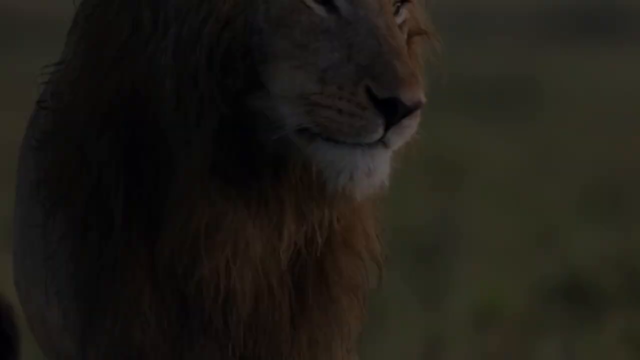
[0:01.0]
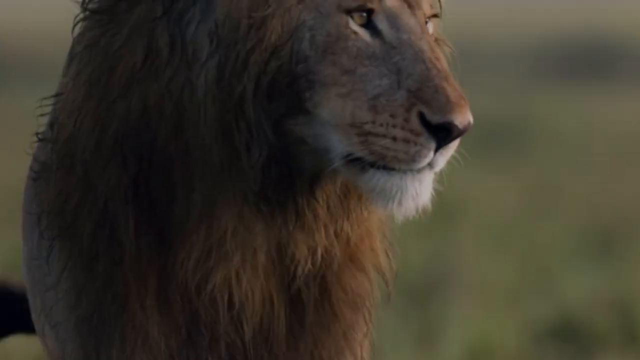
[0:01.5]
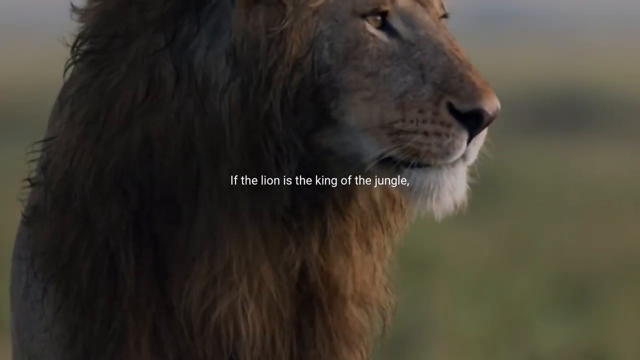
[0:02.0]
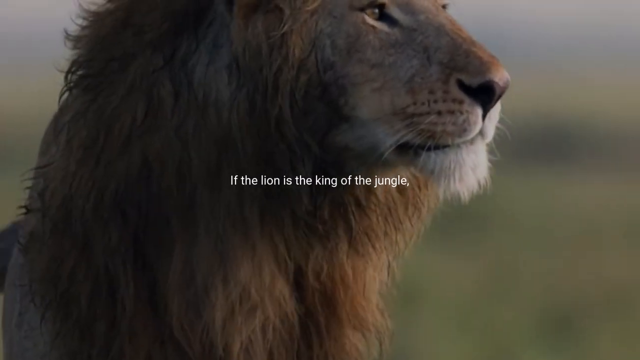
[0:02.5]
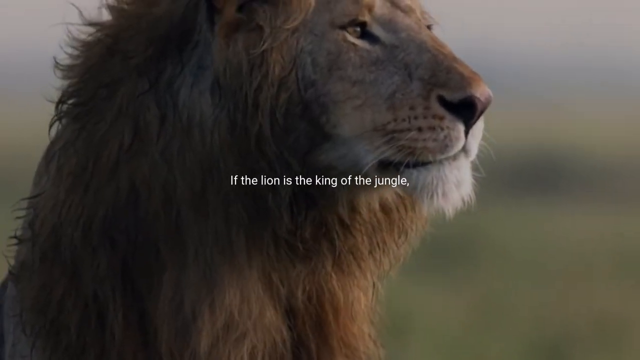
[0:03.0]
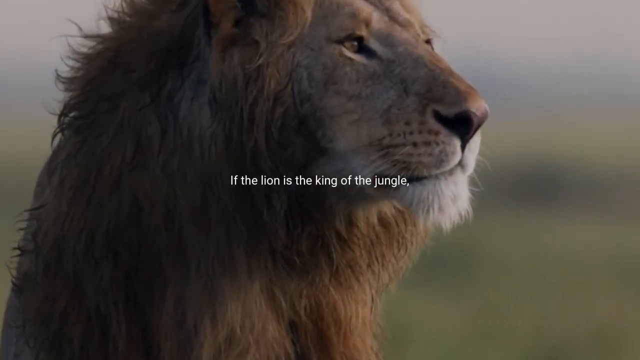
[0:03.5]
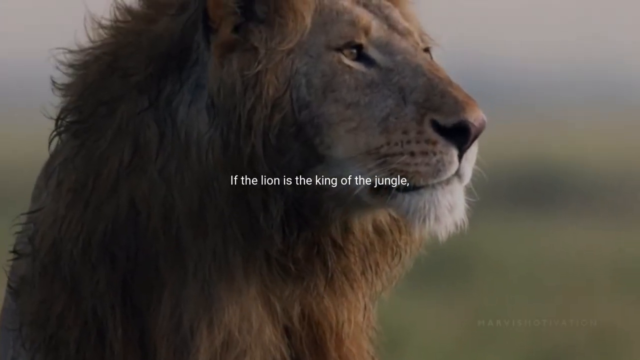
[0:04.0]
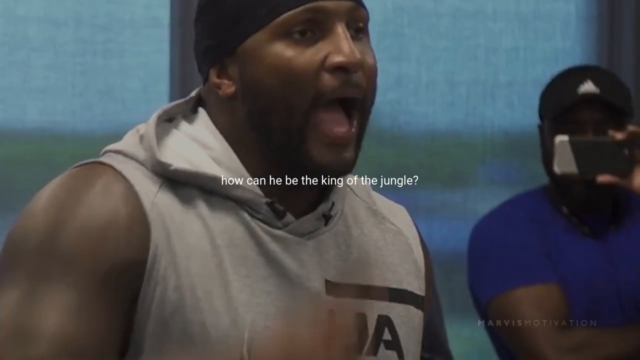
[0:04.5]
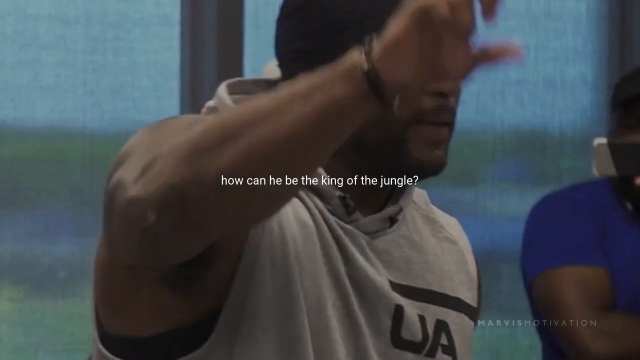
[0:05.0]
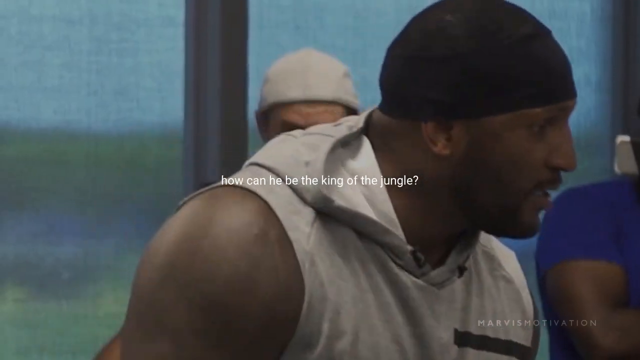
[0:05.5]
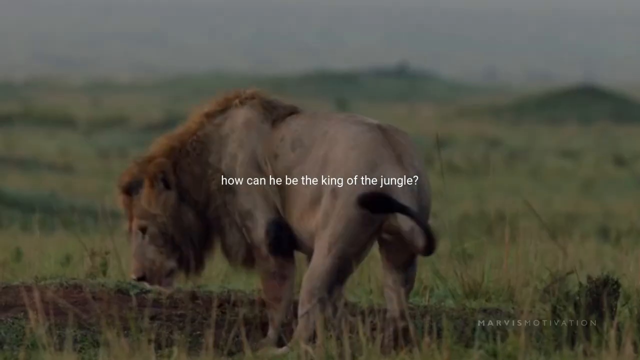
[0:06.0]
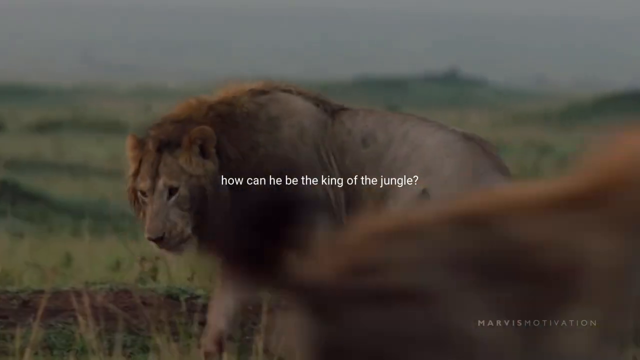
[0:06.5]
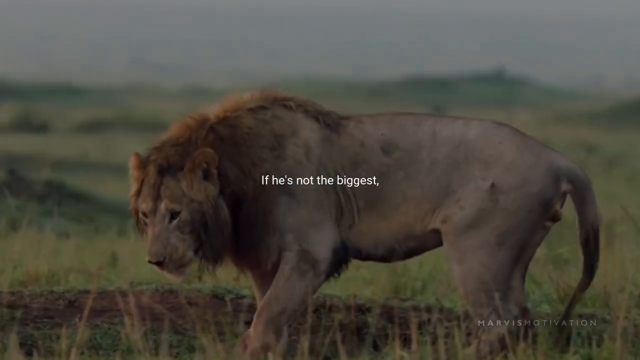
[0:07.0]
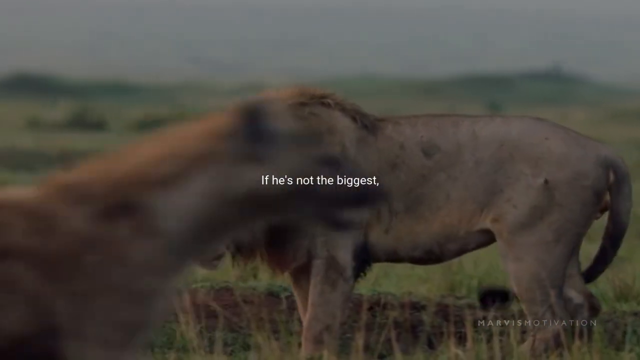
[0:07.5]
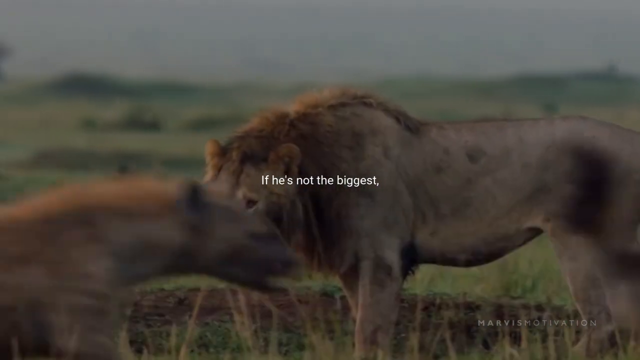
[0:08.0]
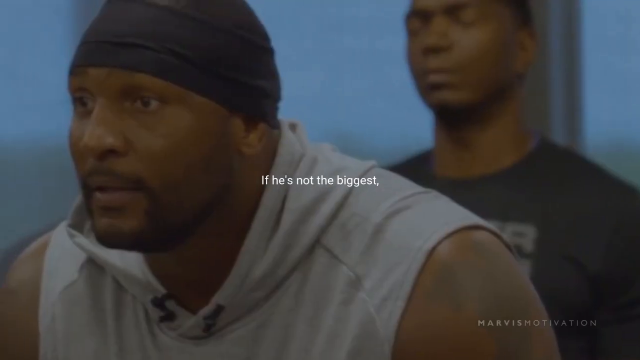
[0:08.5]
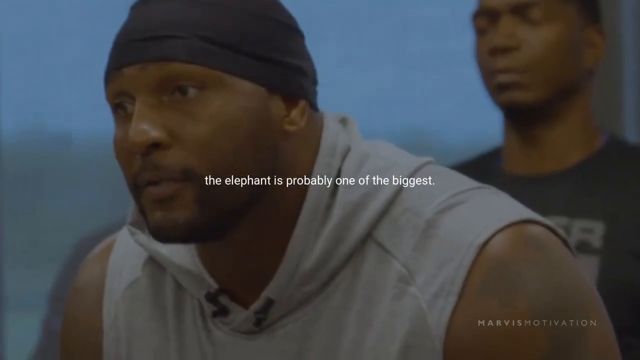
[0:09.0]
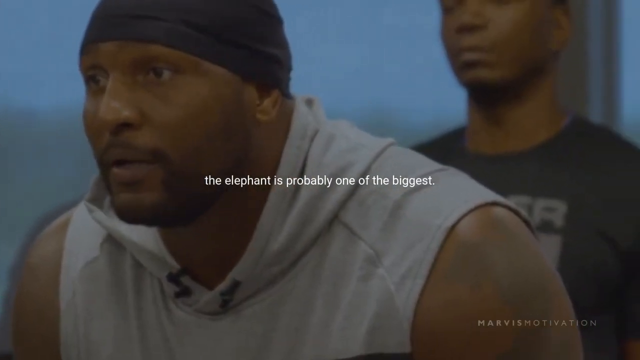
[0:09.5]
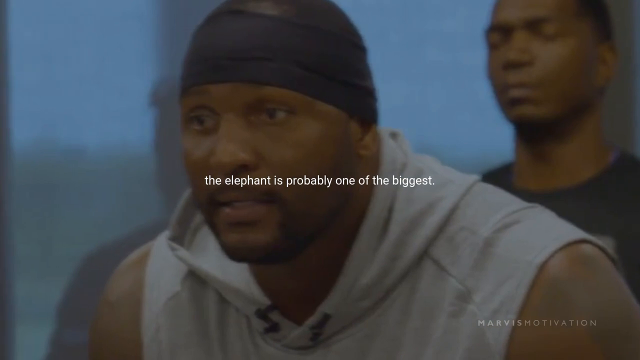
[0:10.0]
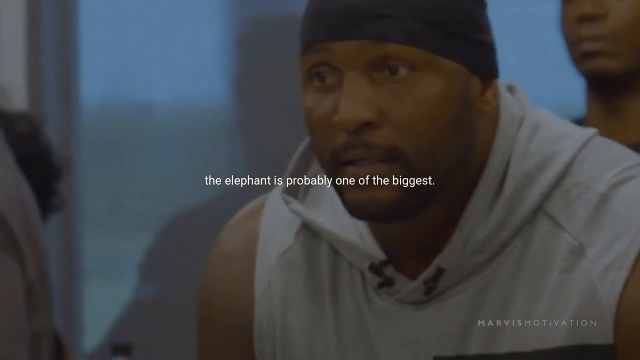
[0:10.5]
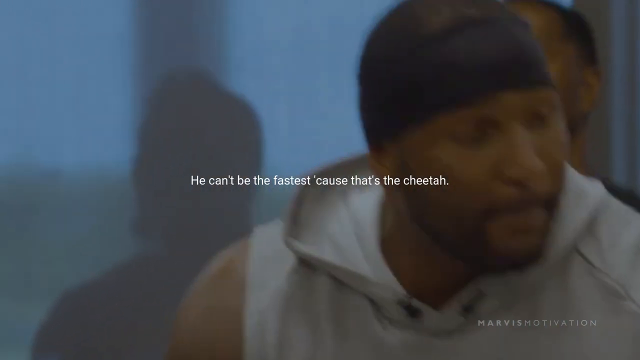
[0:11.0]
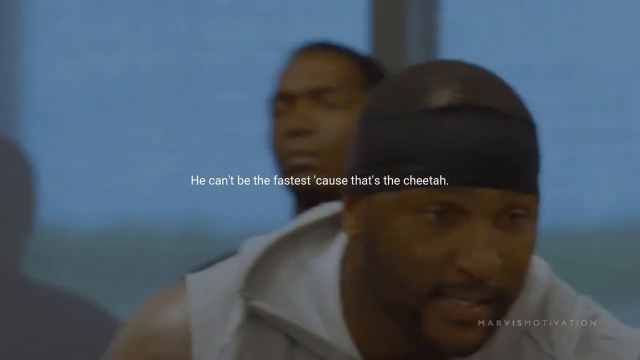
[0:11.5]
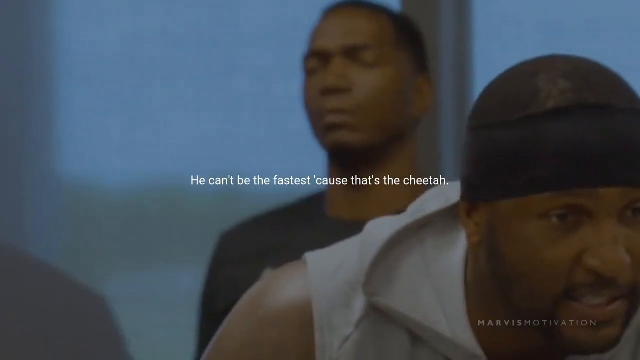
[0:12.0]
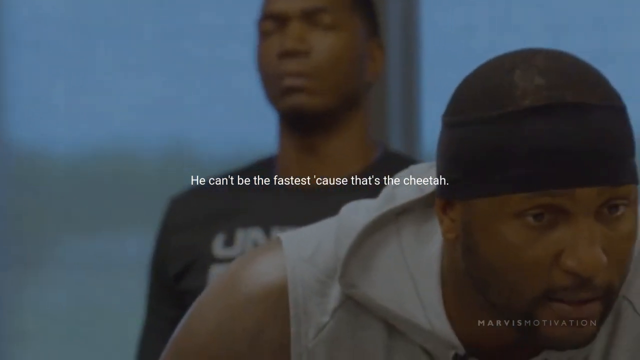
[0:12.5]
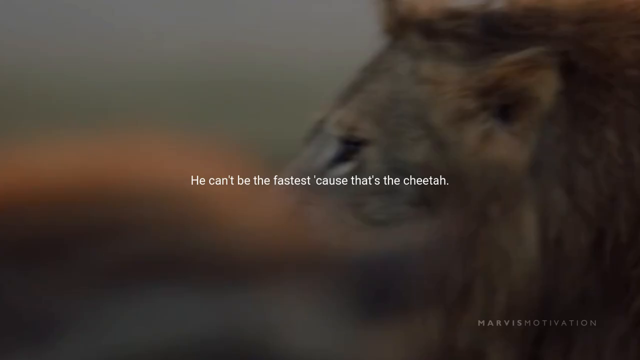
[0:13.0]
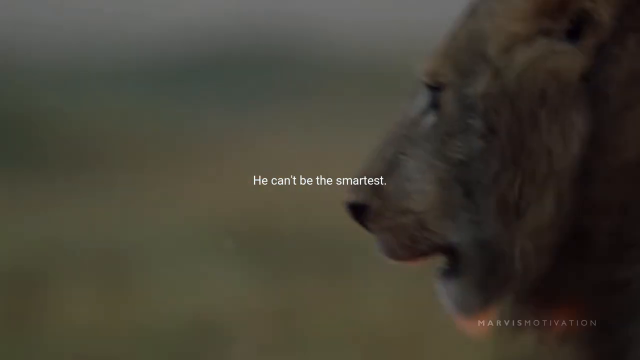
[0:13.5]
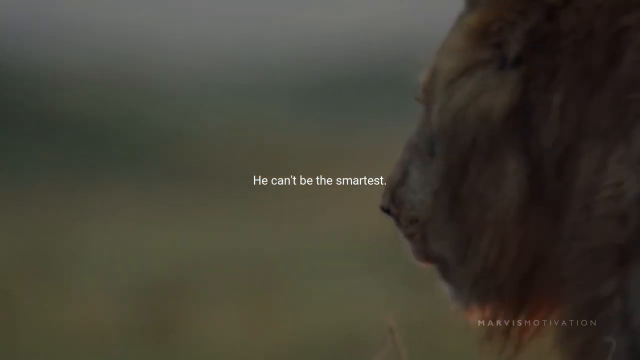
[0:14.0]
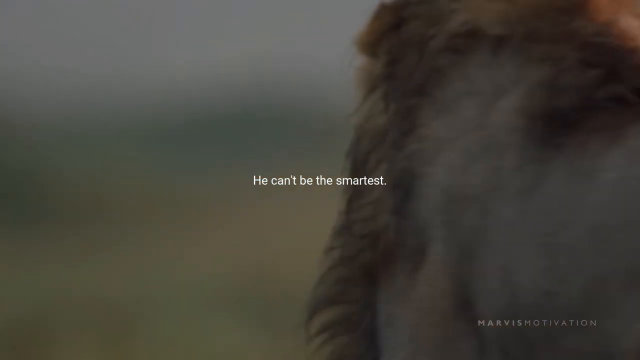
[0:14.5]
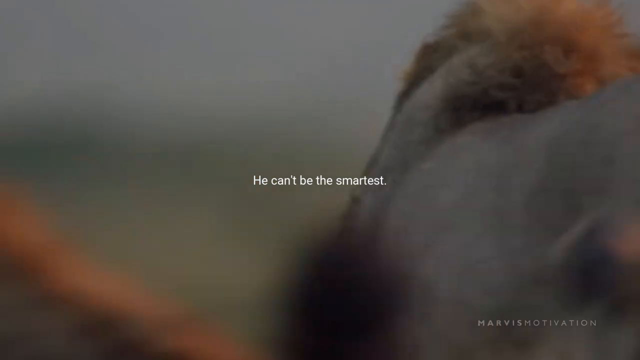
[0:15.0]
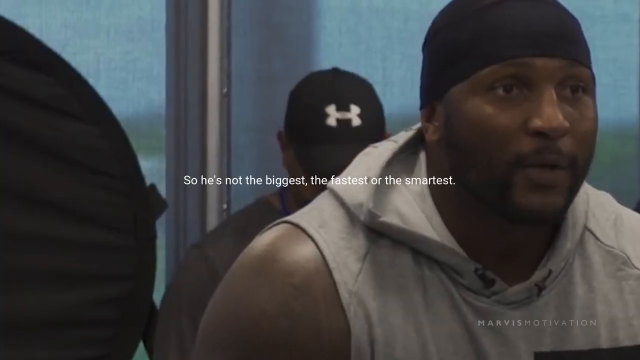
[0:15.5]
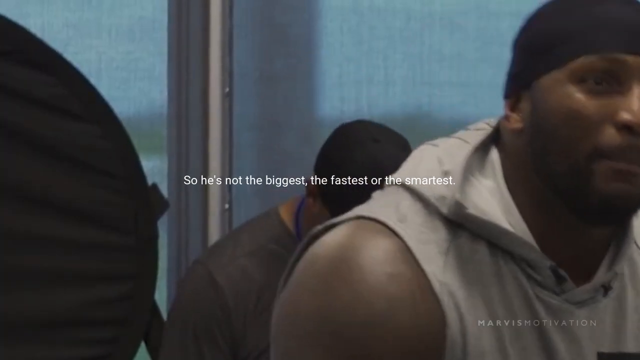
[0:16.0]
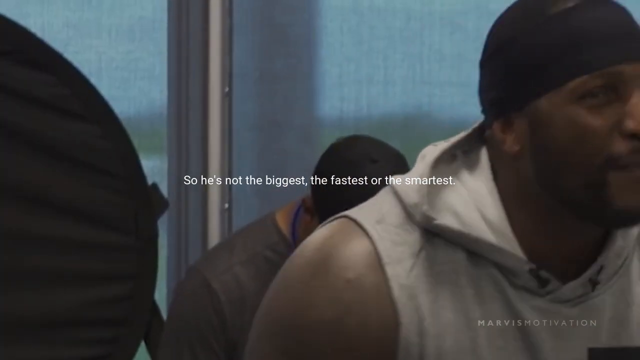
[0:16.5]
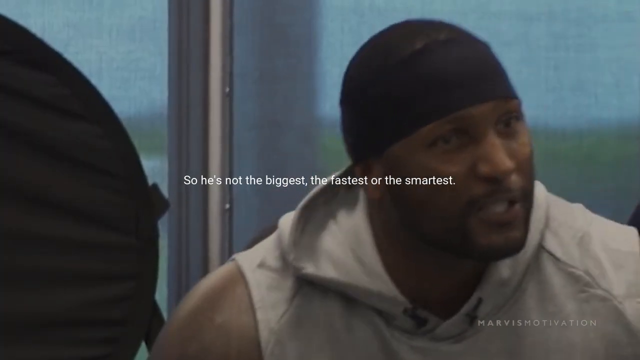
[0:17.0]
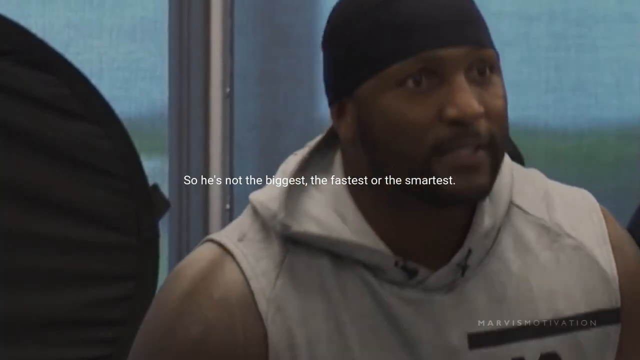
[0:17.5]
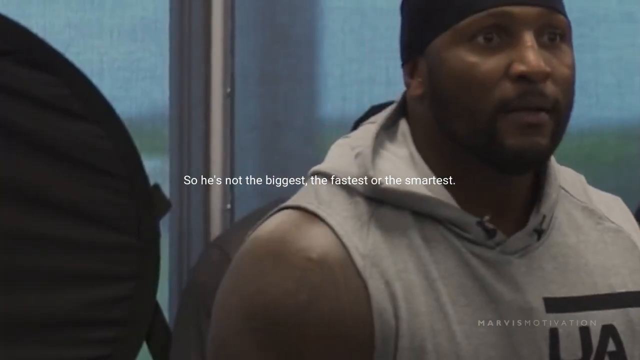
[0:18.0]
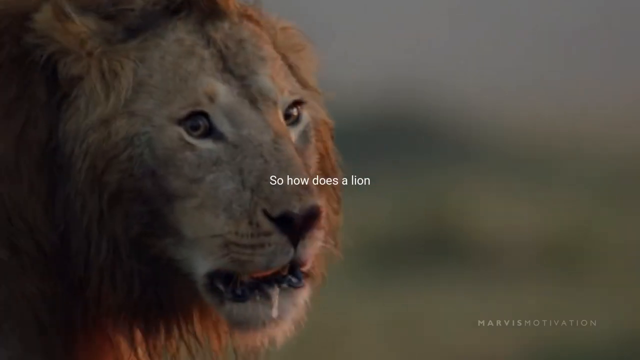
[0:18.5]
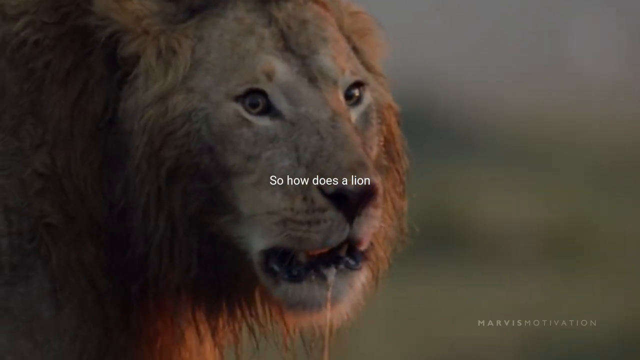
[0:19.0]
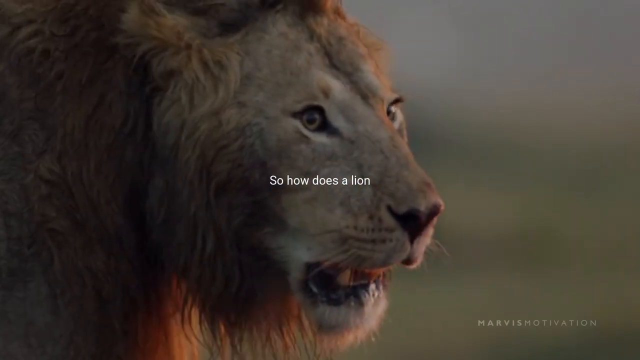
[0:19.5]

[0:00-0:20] A large lion with a beautiful-looking mane appears with white text that reads "The lion is the king of the jungle." The scene transitions to two African American individuals, one wearing a sort of black hat. It then cuts back to a lion with white text that begins "How can" and continues with lines such as "The elephant is probably one of the biggest," "He can't be the fastest because that's the cheetah," "He can't be the smartest" and "So how does a lion." The segment then shows a lion and a hyena, with no human subjects besides the two individuals seen earlier, and a few different screen transitions.